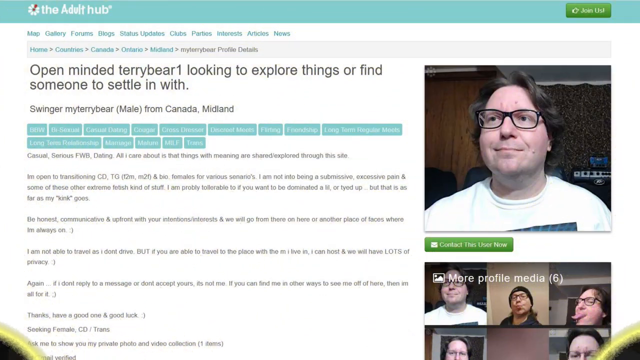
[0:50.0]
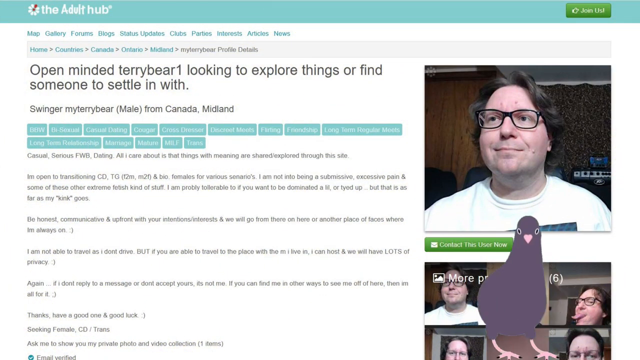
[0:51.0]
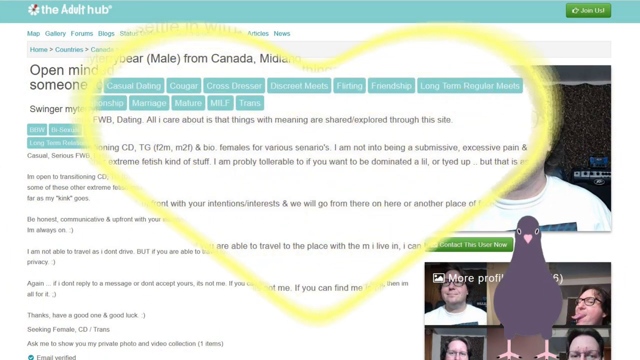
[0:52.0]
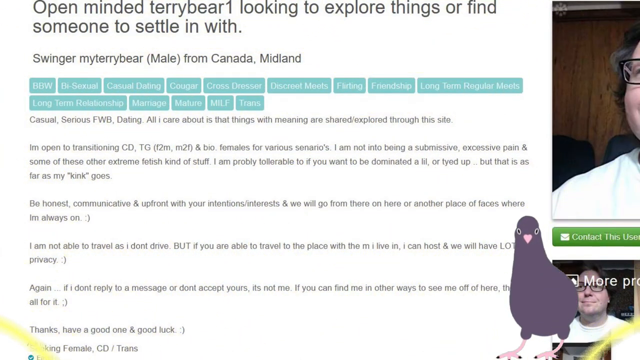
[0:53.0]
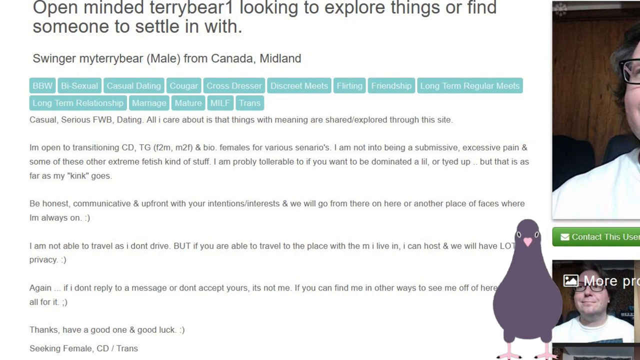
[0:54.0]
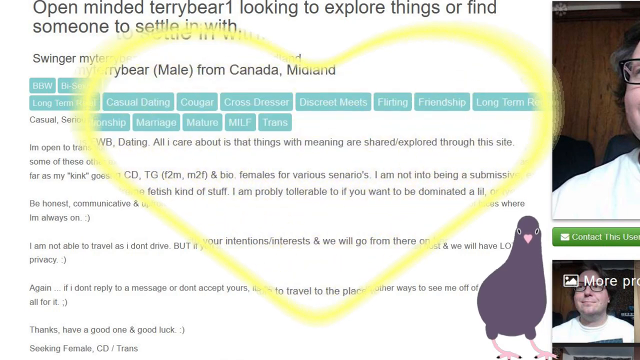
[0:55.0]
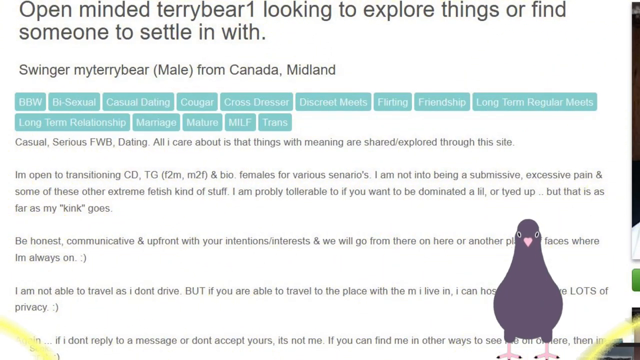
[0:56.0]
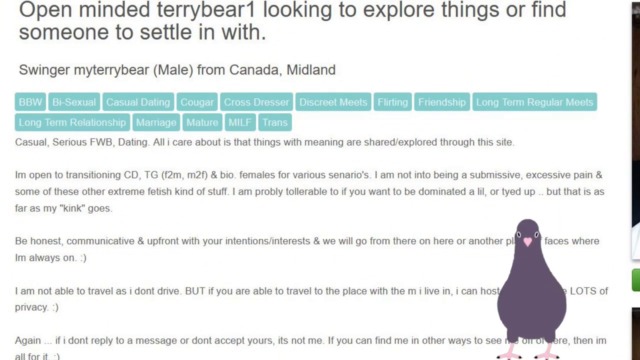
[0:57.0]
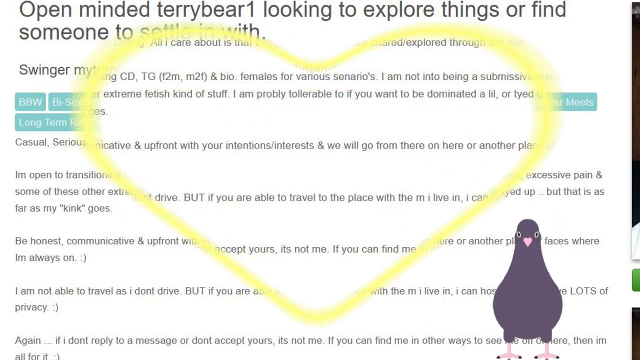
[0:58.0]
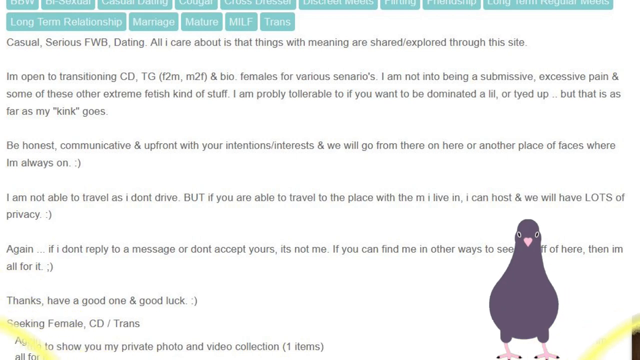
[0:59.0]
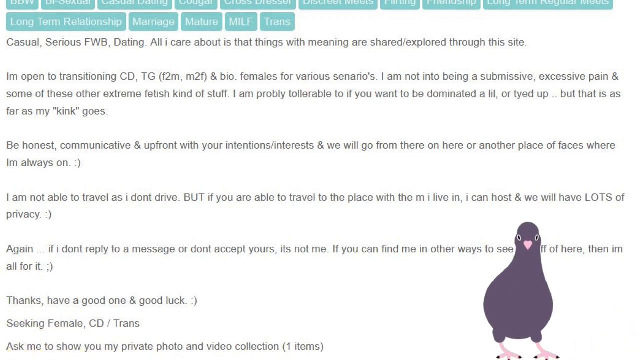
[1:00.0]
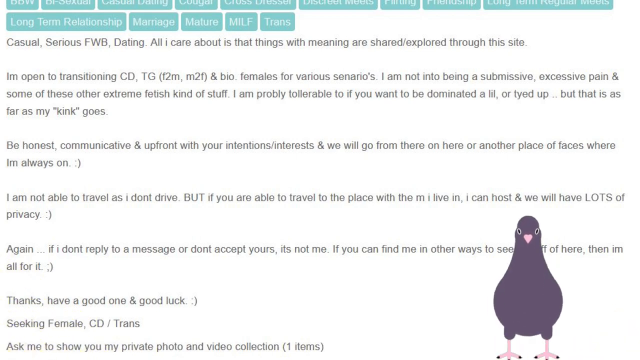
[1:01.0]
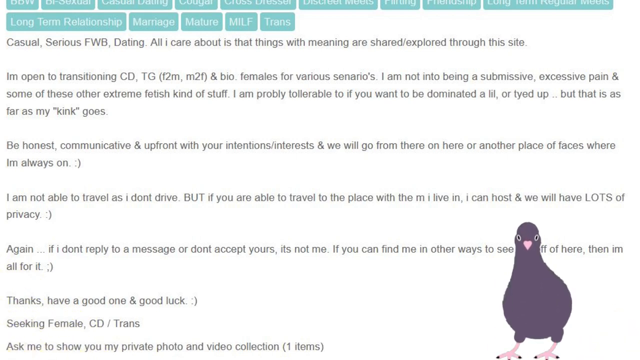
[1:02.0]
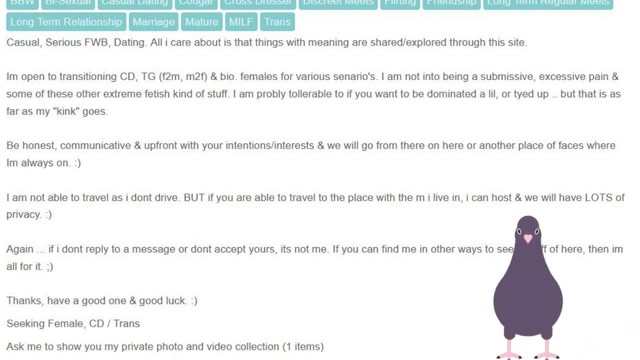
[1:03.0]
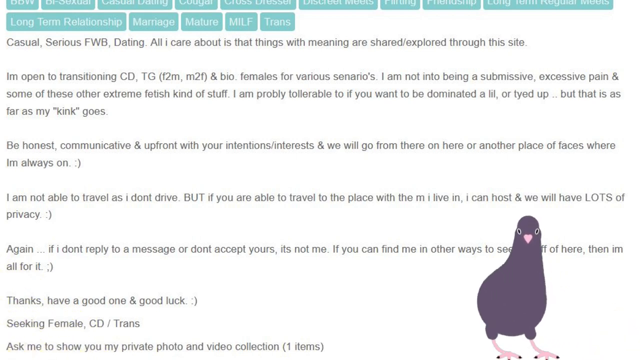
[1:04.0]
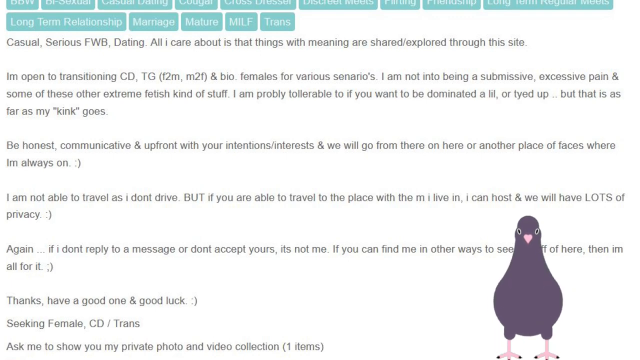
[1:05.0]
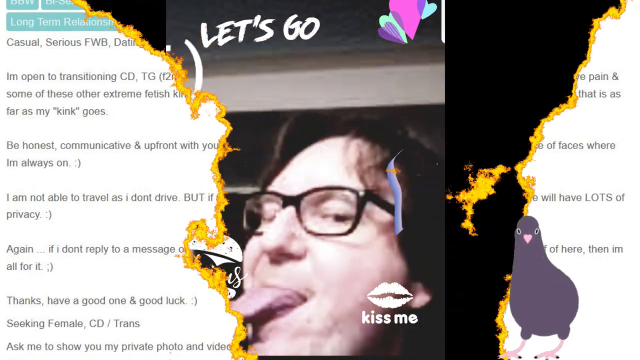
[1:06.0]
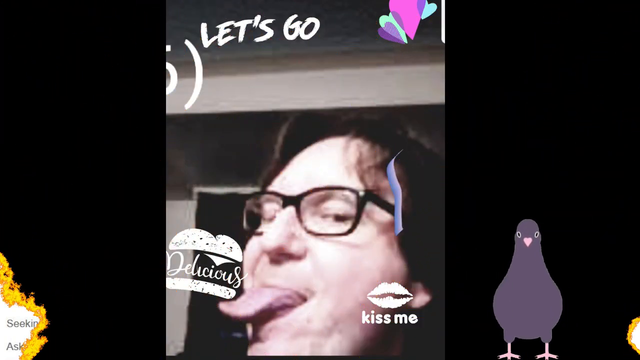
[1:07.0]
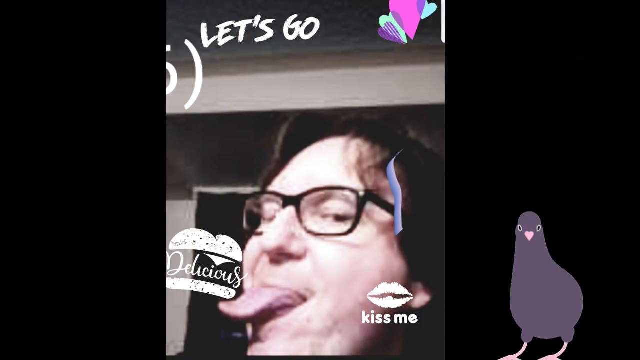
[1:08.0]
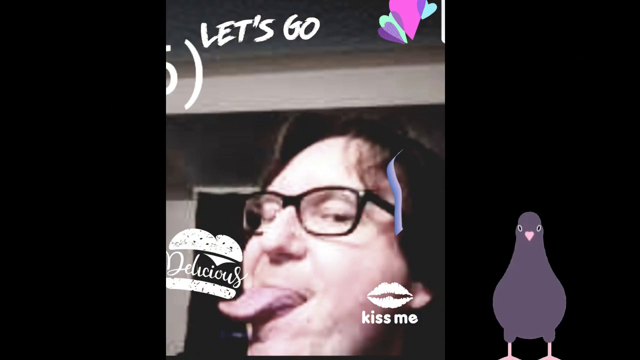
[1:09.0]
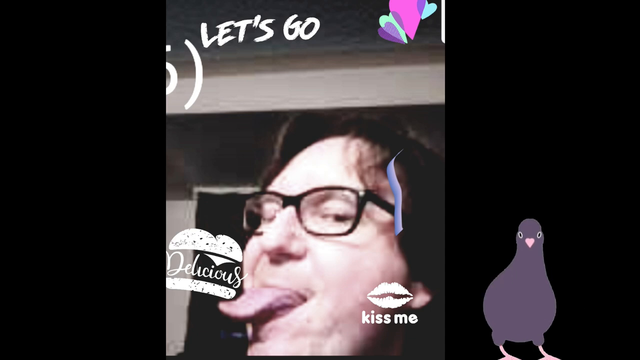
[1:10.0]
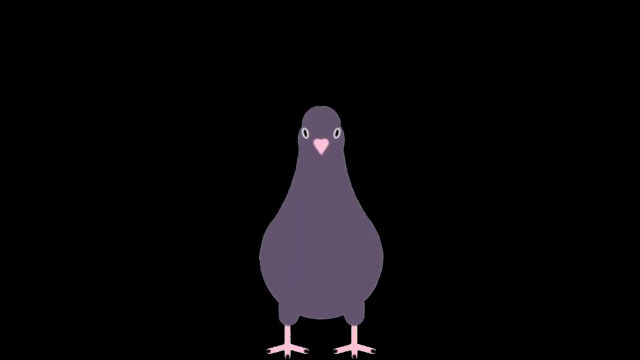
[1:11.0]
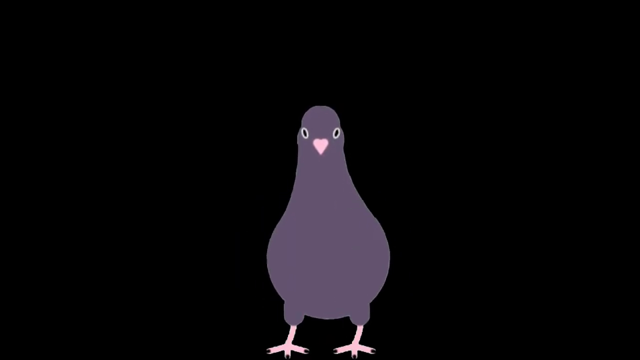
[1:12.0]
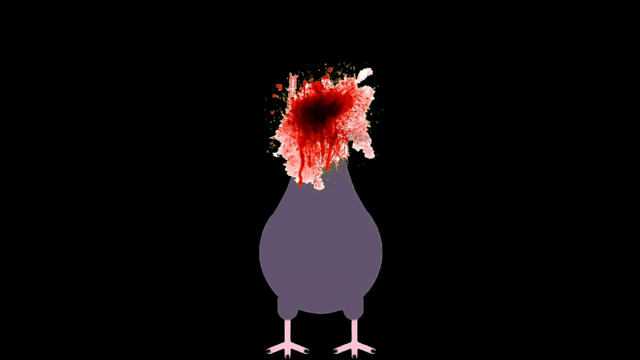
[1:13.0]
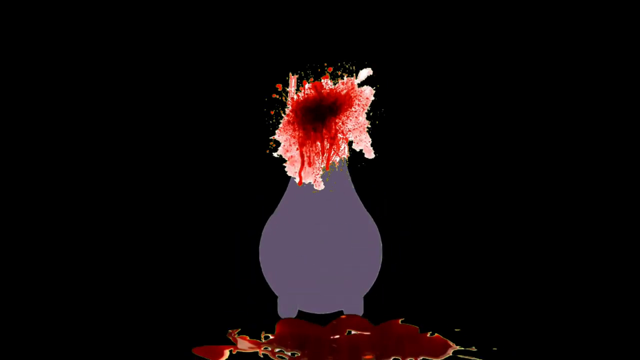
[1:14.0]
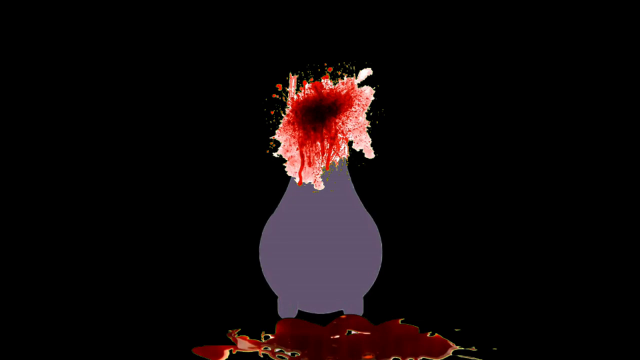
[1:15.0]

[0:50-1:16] The heart graphic fills into view as a website, "The Adult Hub", appears, with "More Profile Media 6" on the side and a picture of a man. Menu items include "Forums", "Blogs", "Status Updates", "Clubs", "Parties", "Interests", "Articles", and "News", along with "Home" and an item beginning with "Map". Profile text reads "Open-Minded Terry Bear One, looking to explore things or find someone to settle in with", with "Swinger", "My Terry Bear Male from Canada, Midland" and "FWB Dating", followed by a lot of written profile text, which appears to be the dating profile of someone named Terry Bear One. Among it are lines such as "I'm not into being a submissive, excessive pain, and some of these other extreme fetish kind of stuff", "But that is as far as my kink goes", "I am not able to travel as I don't drive", and "Casual, serious FWB dating". An animation of the crow with a pink beak dancing comes into the bottom right corner, along with another yellow heart animation. The heart graphic appears again with the dancing crow, or possibly a pigeon. The video then shows the man with his tongue sticking out and glasses on, with the text "let's go up top". The dancing bird appears in the middle of the screen, and at the end it looks like someone has shot the bird.